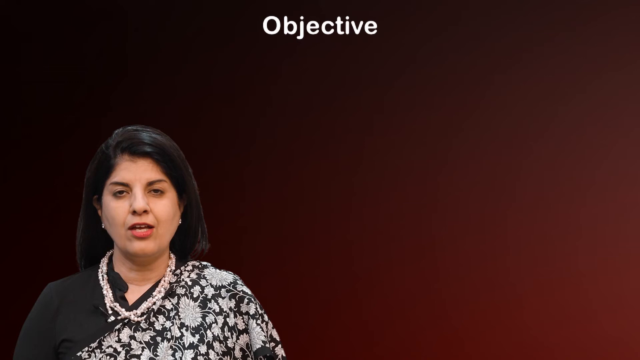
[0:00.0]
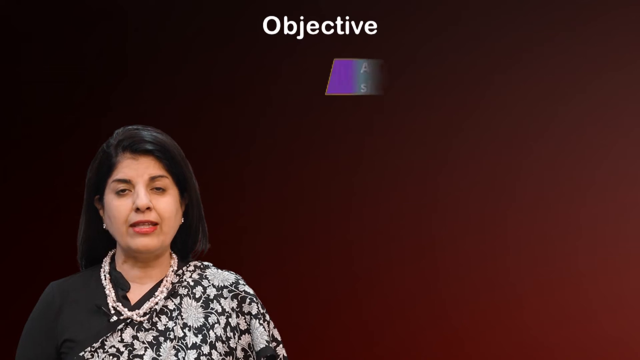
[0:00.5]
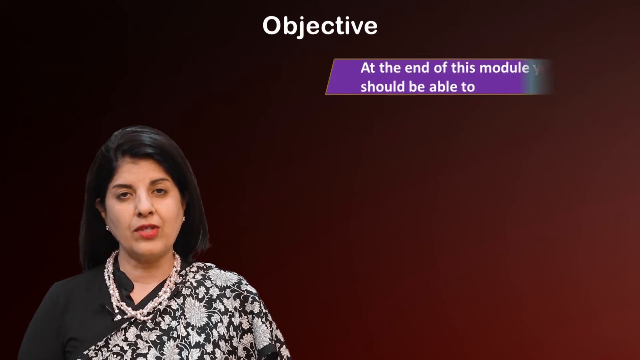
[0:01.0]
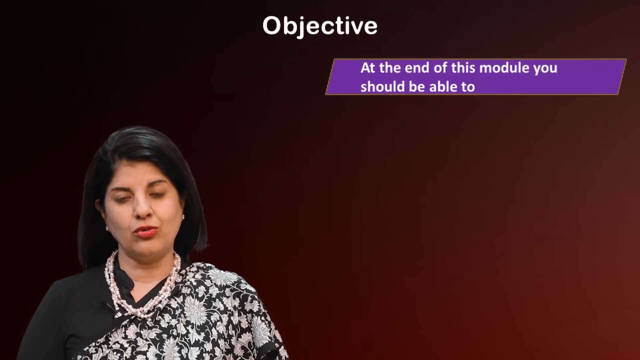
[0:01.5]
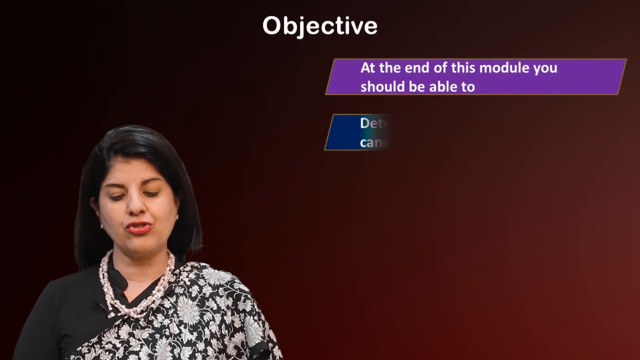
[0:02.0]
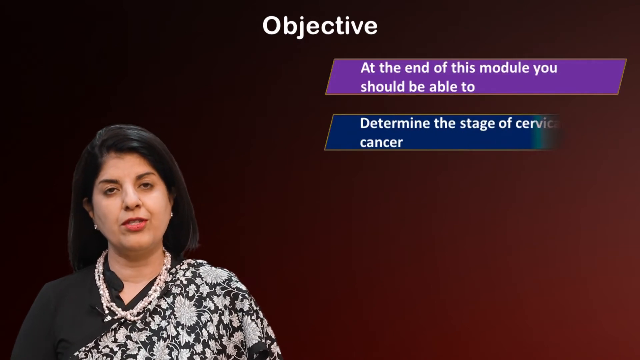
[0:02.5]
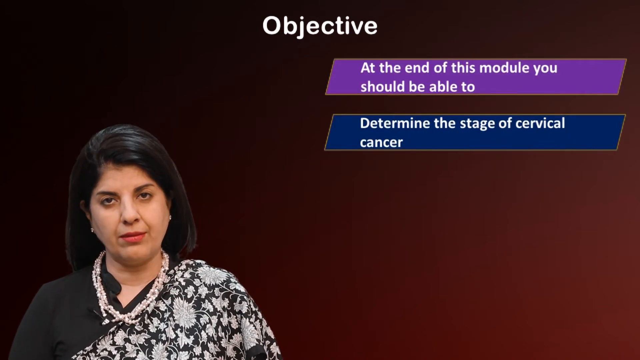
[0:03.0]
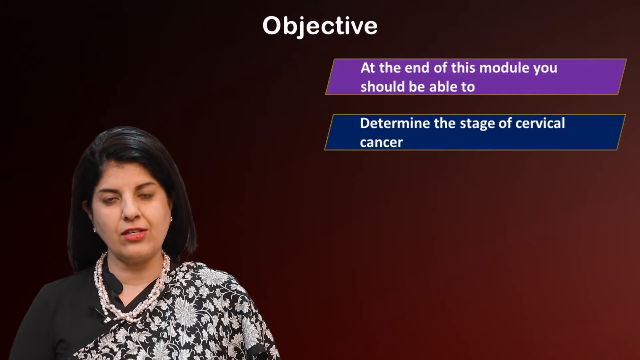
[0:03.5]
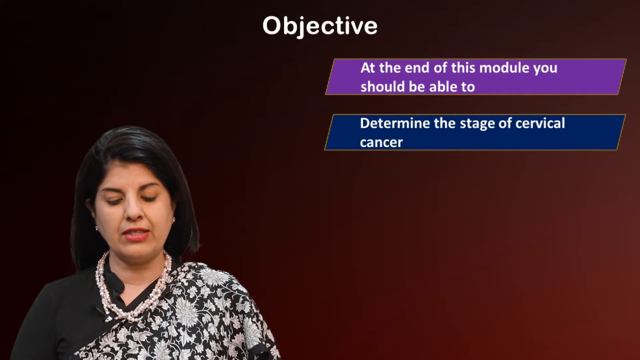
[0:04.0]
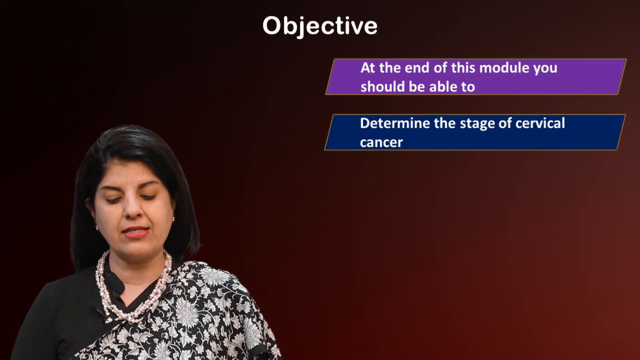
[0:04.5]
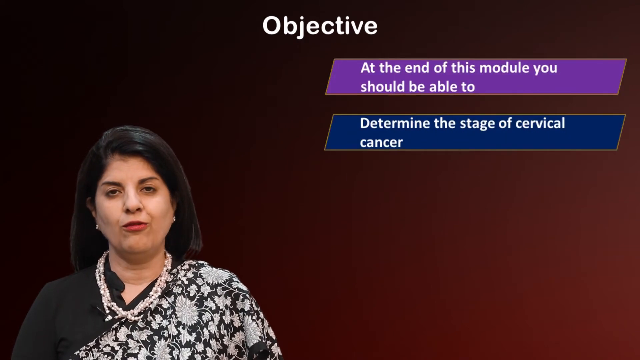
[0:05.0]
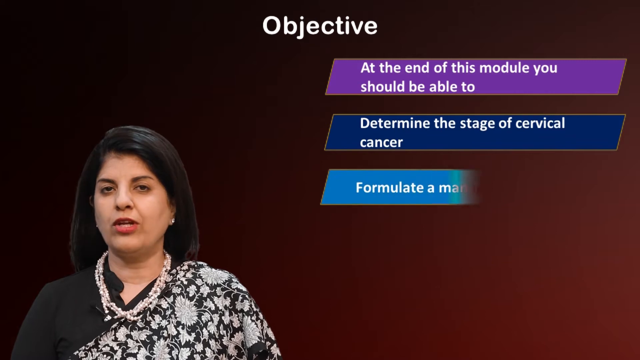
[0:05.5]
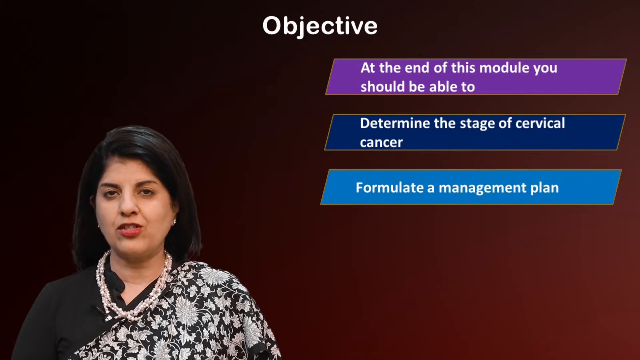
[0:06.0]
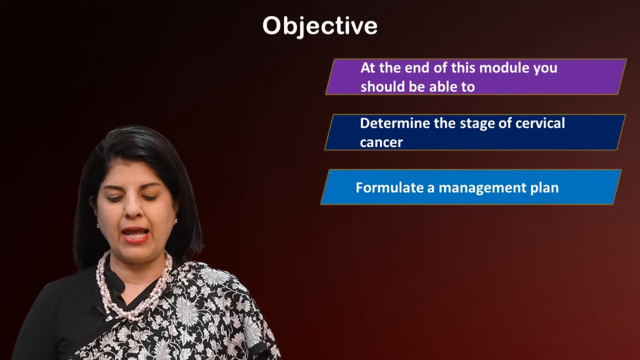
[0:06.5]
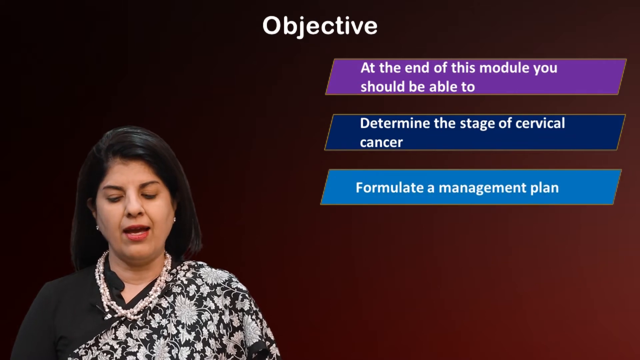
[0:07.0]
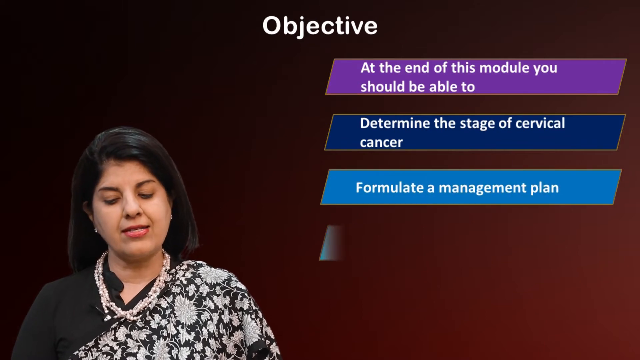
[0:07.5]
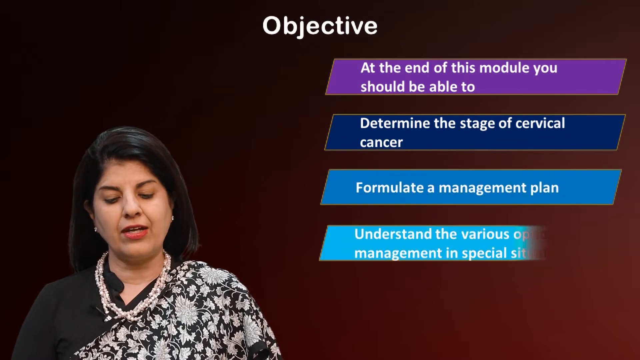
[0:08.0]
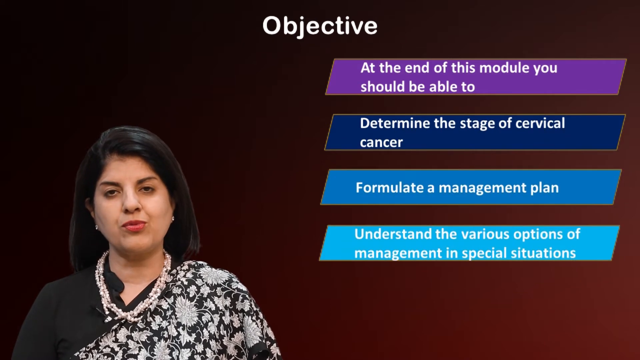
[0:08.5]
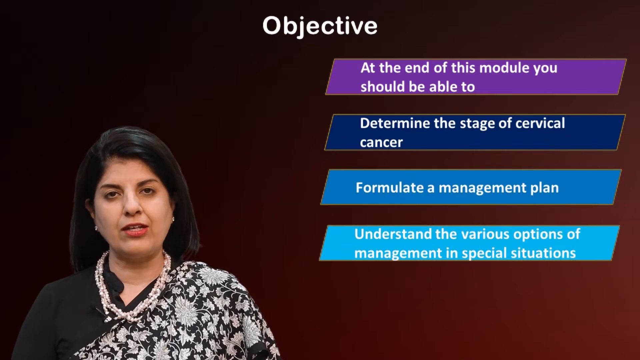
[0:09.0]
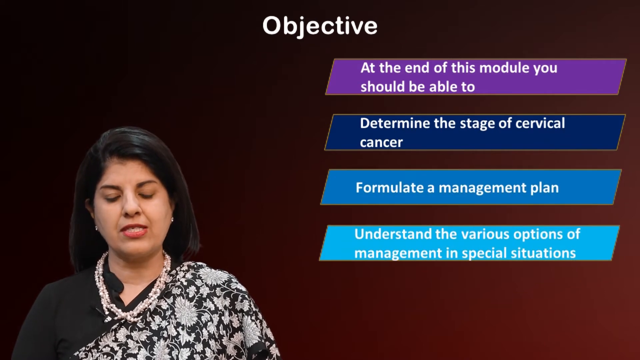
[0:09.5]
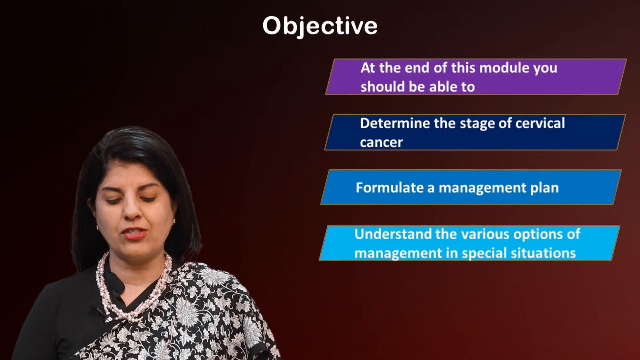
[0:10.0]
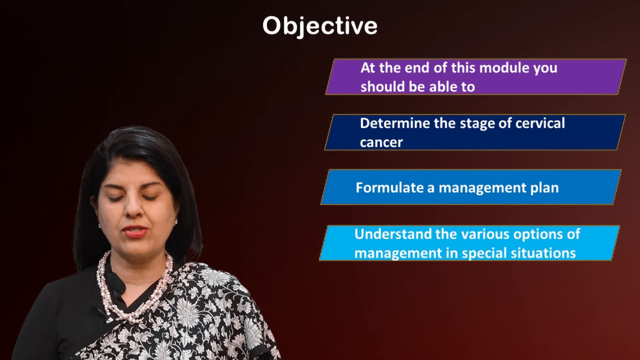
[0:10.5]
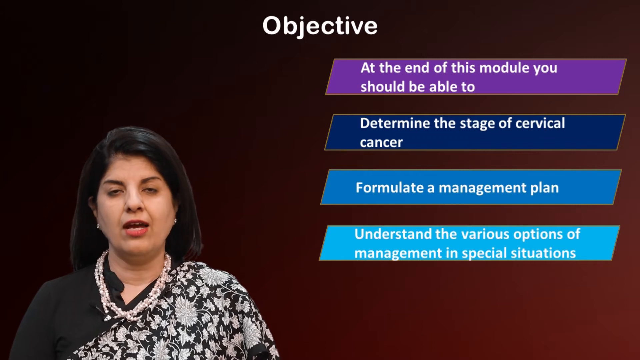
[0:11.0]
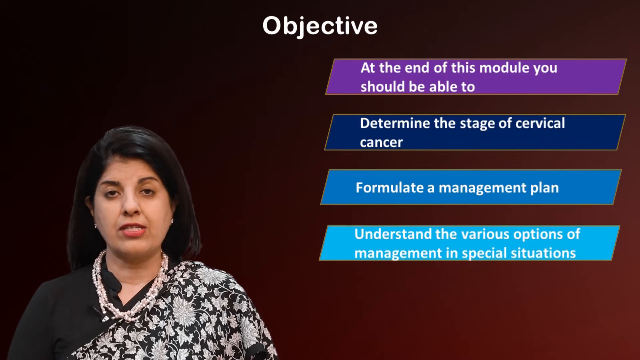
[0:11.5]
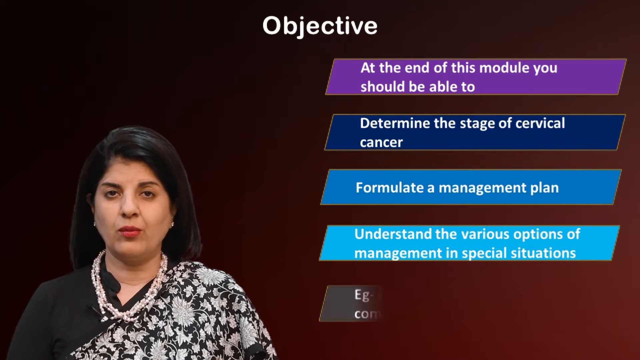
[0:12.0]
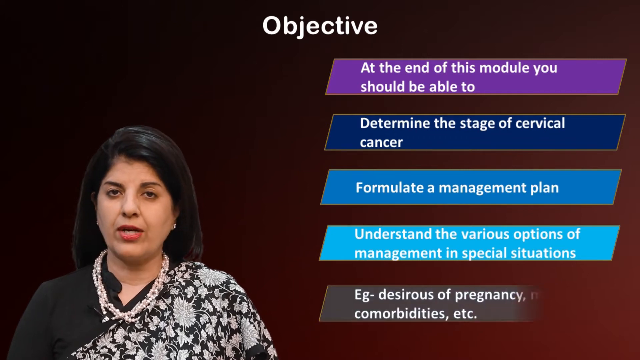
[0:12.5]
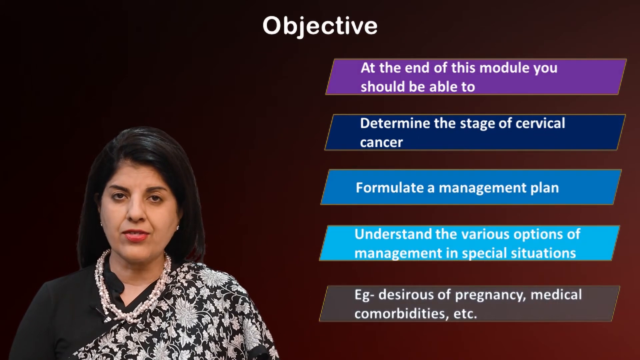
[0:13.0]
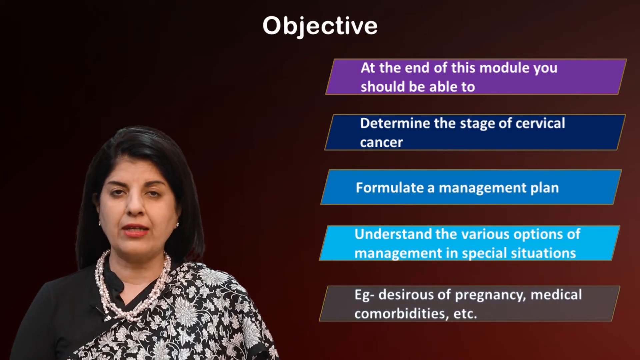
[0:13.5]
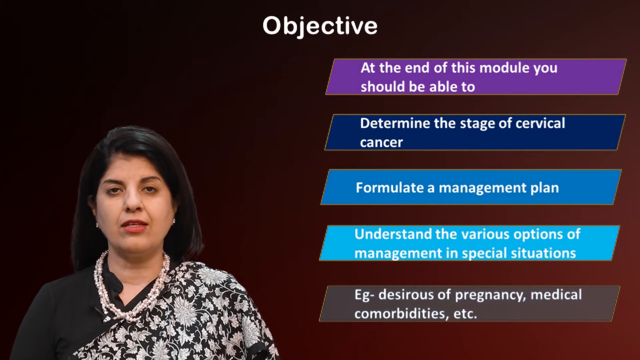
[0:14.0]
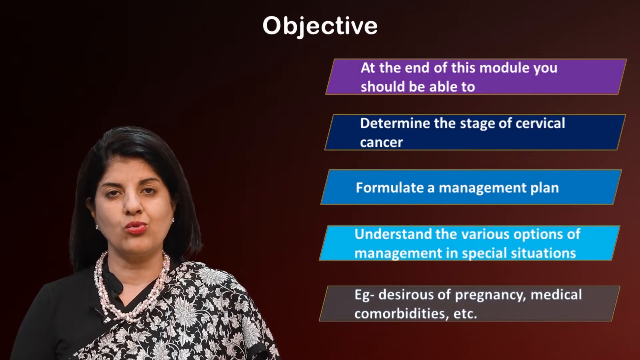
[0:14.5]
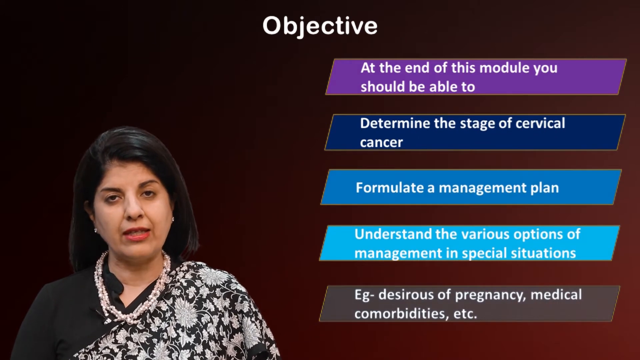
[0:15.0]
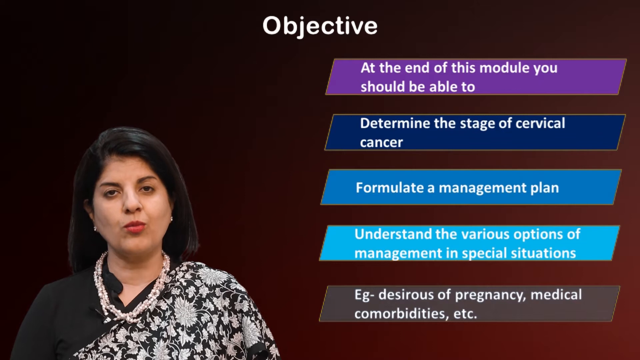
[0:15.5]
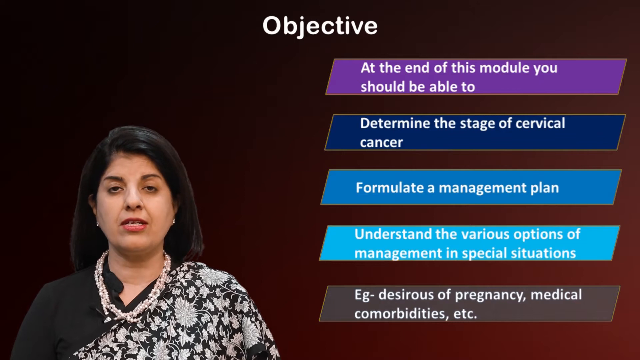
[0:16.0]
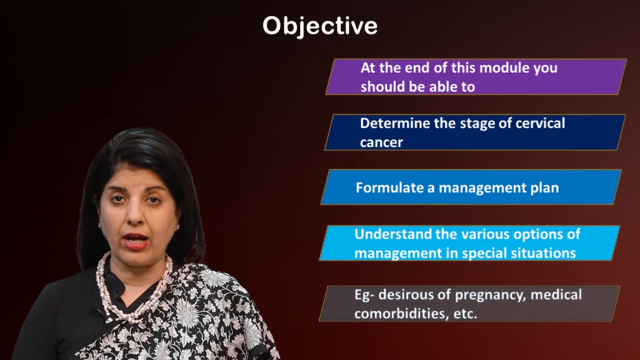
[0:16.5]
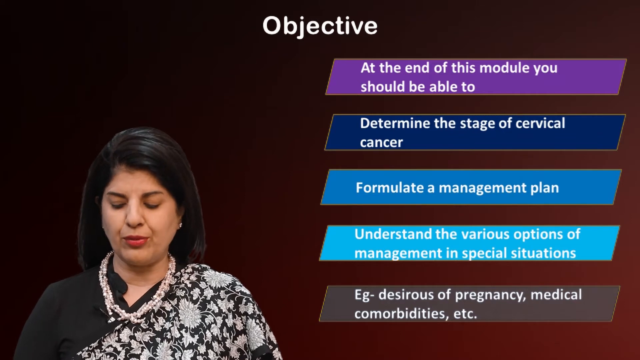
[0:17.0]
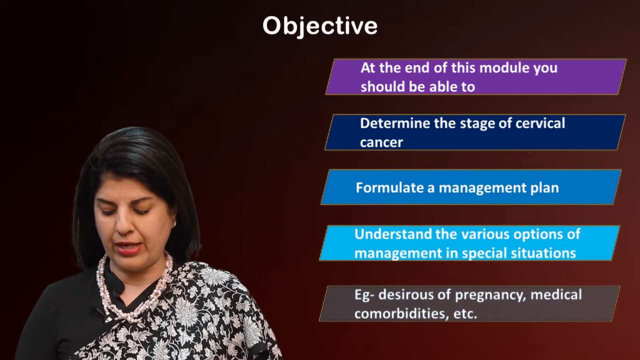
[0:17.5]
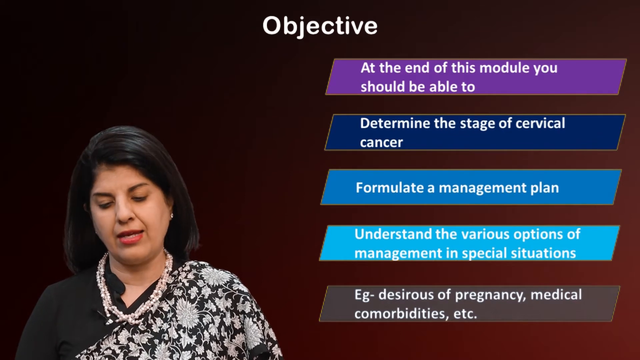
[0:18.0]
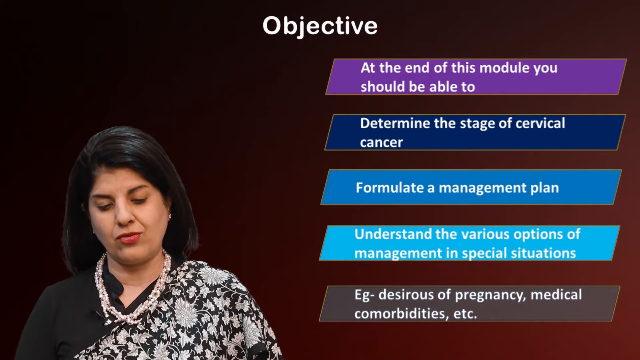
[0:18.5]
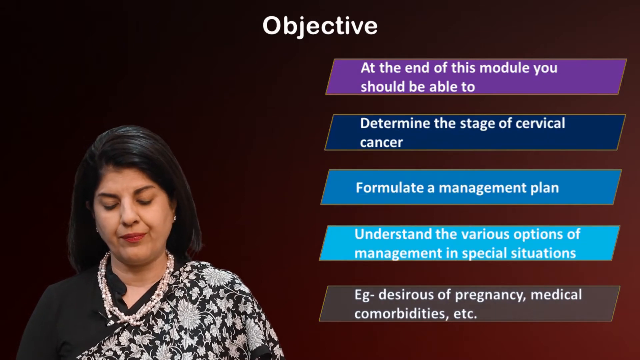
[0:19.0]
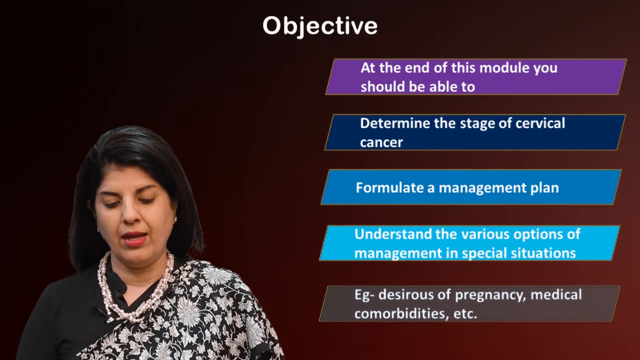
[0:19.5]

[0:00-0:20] A woman appears next to what looks like a PowerPoint presentation. She has long dark hair and a darker skin tone, and appears to be wearing a black blouse with white flowers on it, possibly with a necklace. The background of the presentation is a black screen that fades into a light red tone in the bottom right-hand corner. It looks to be a medical presentation or conference of some sort. On the right side of the screen are different information bubbles.